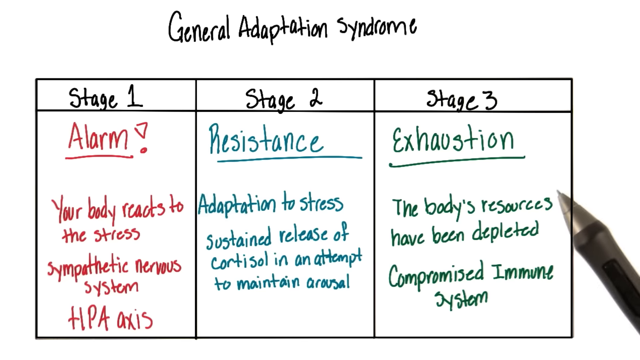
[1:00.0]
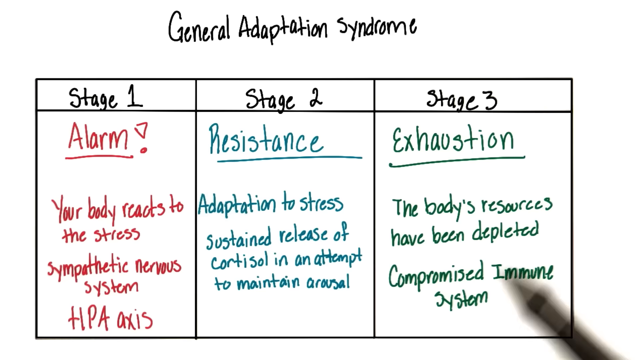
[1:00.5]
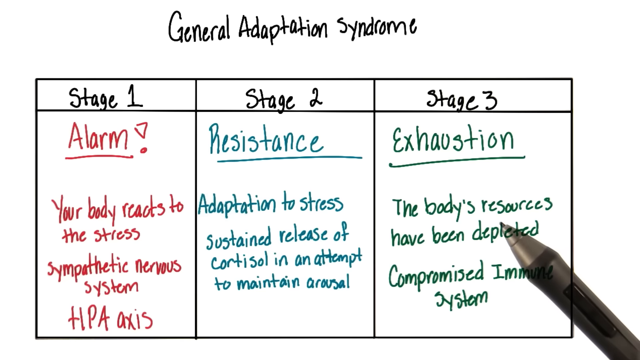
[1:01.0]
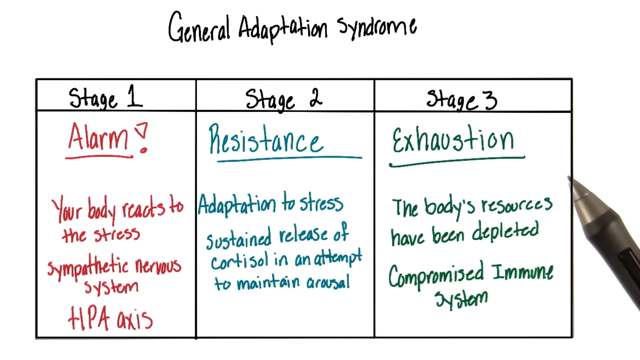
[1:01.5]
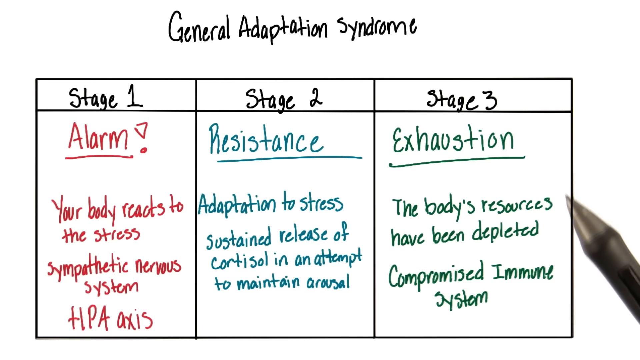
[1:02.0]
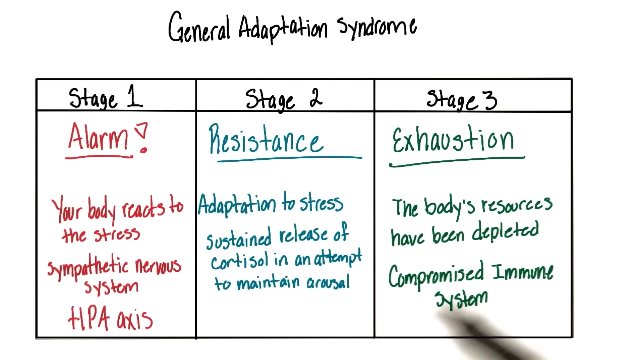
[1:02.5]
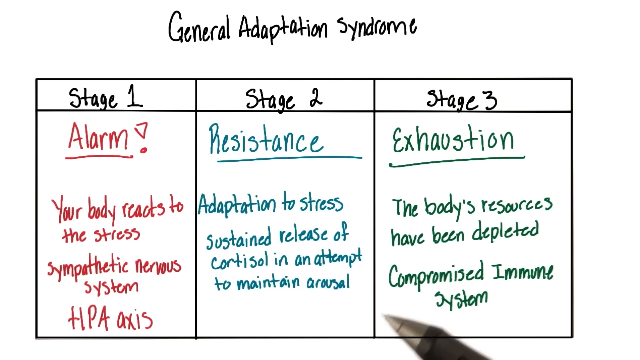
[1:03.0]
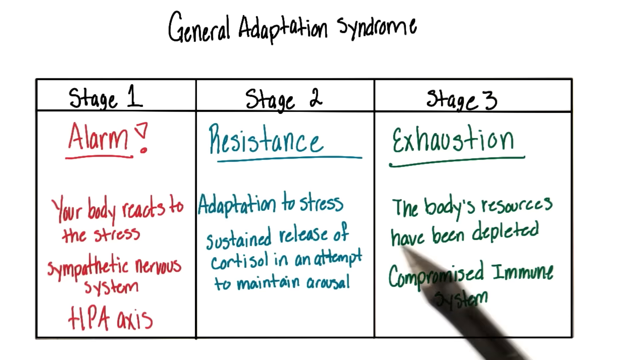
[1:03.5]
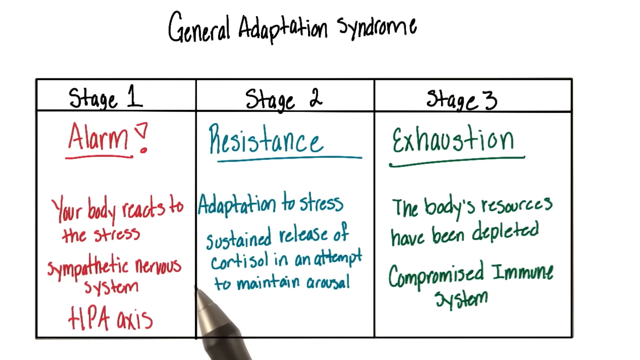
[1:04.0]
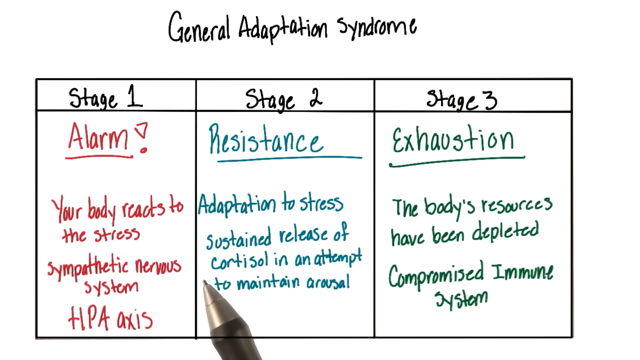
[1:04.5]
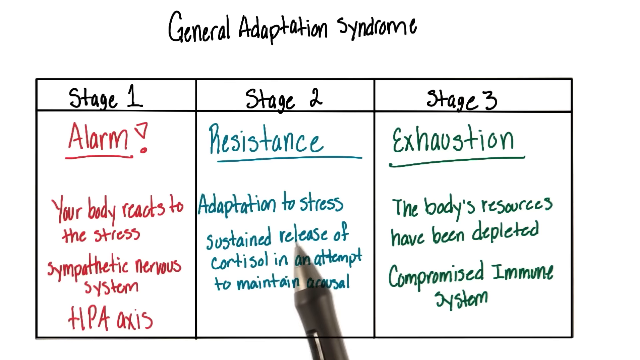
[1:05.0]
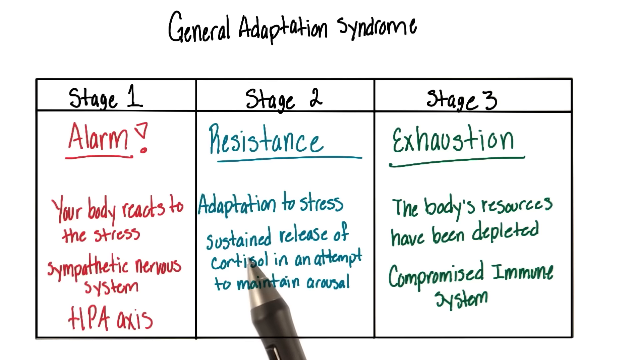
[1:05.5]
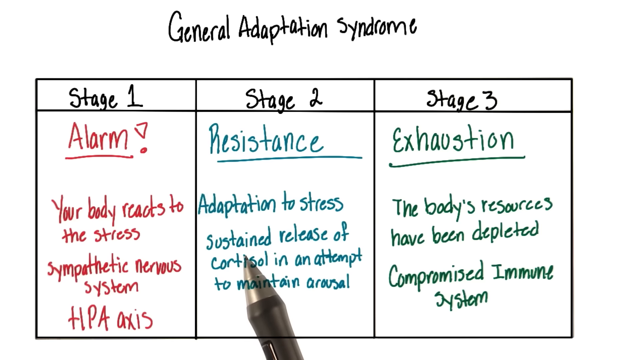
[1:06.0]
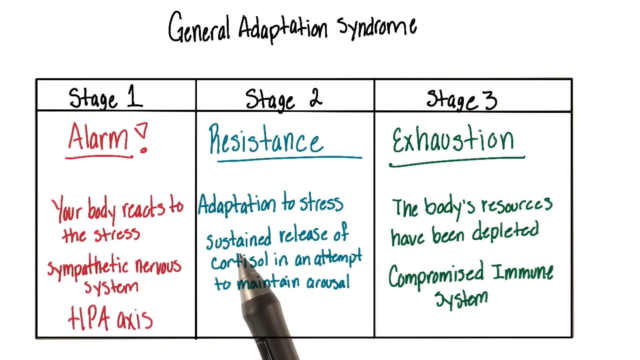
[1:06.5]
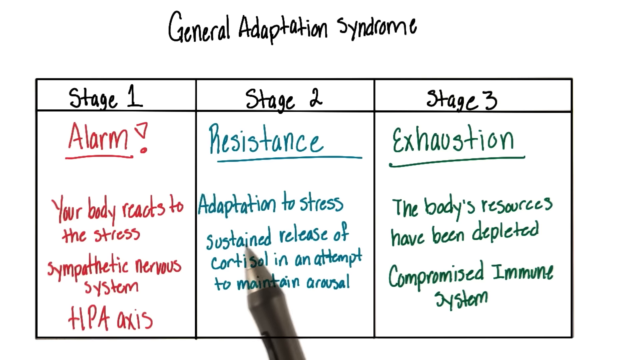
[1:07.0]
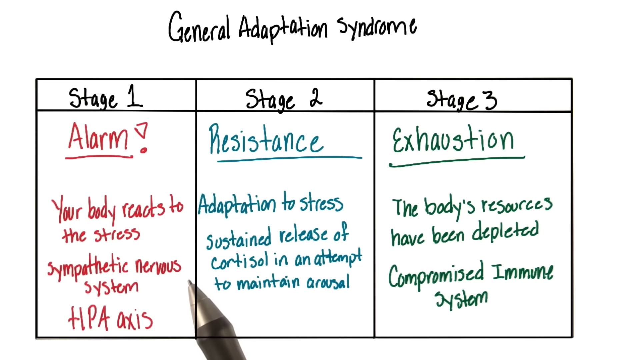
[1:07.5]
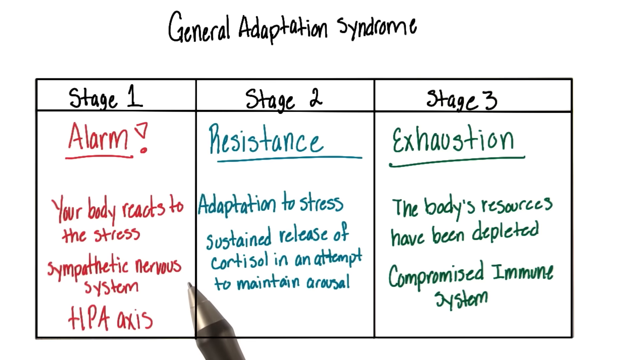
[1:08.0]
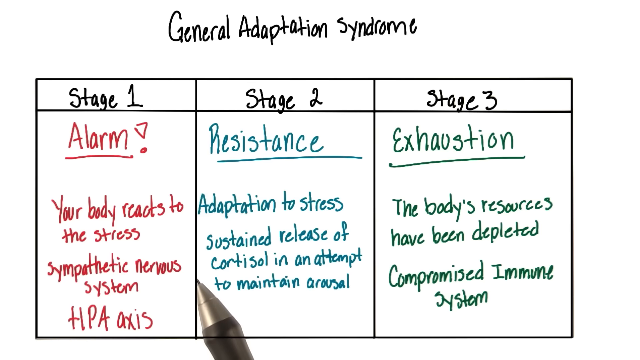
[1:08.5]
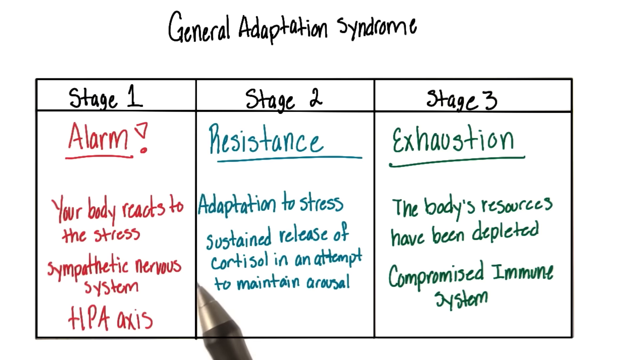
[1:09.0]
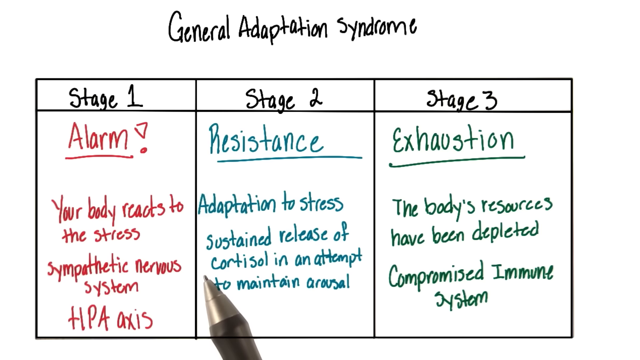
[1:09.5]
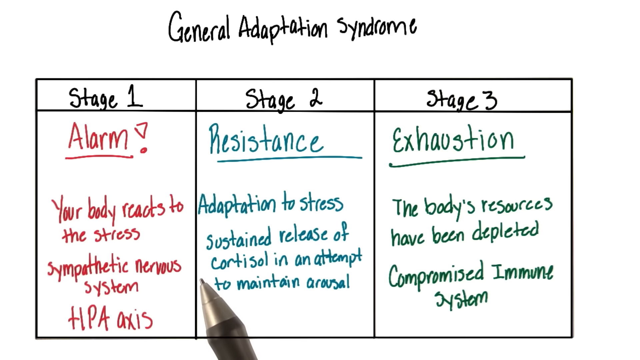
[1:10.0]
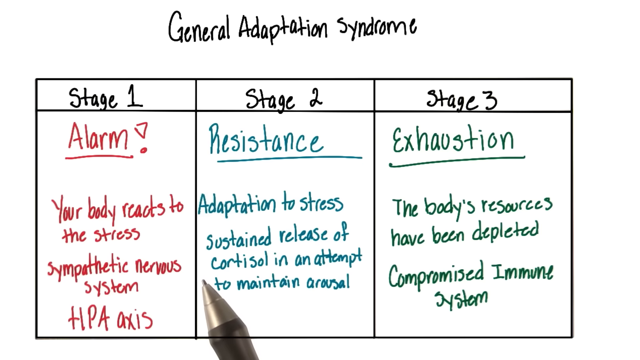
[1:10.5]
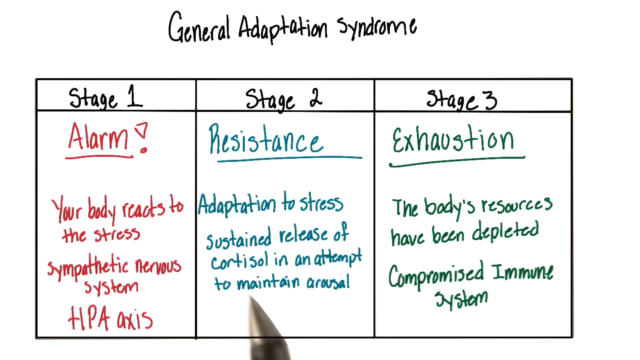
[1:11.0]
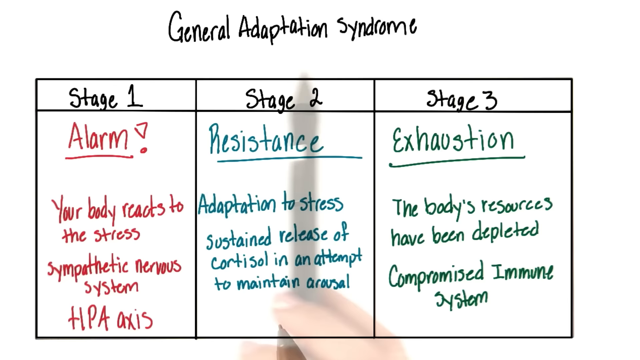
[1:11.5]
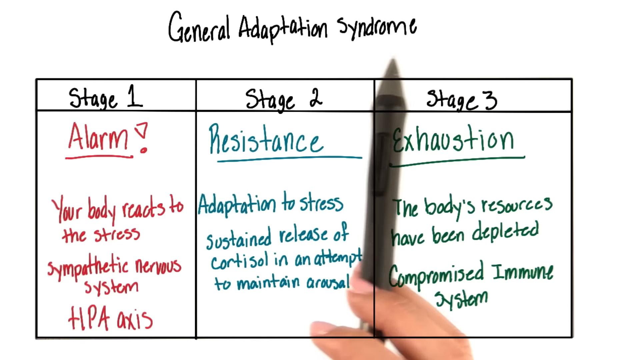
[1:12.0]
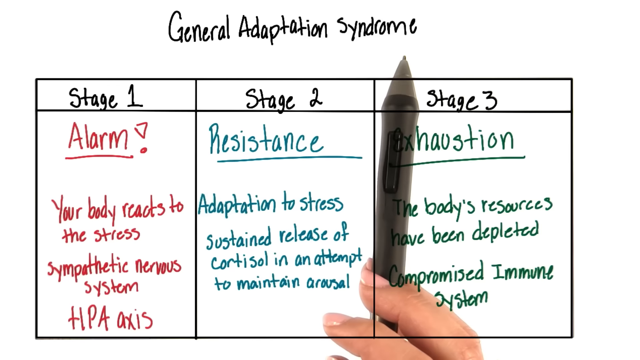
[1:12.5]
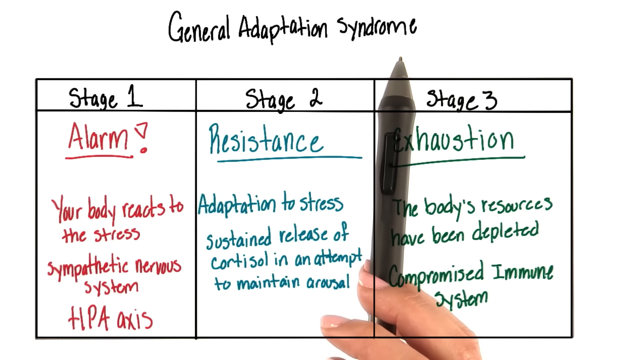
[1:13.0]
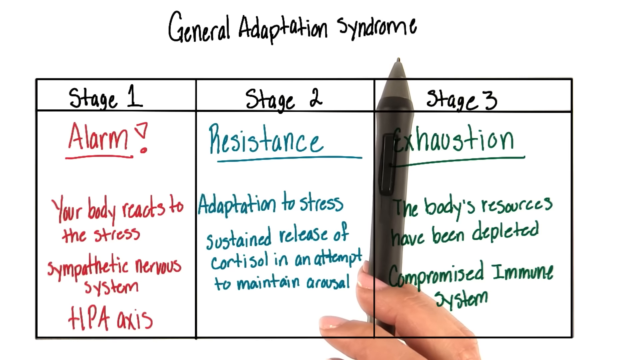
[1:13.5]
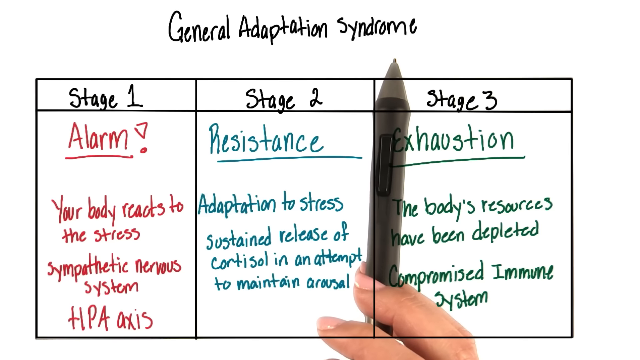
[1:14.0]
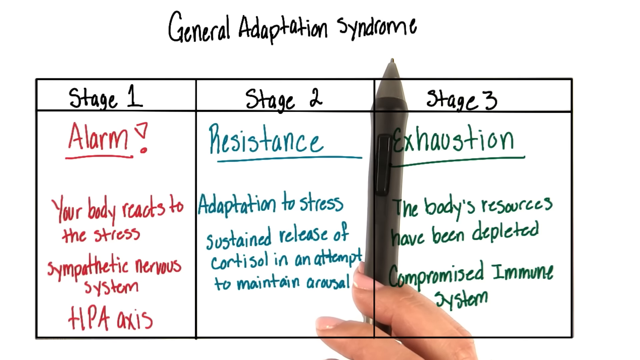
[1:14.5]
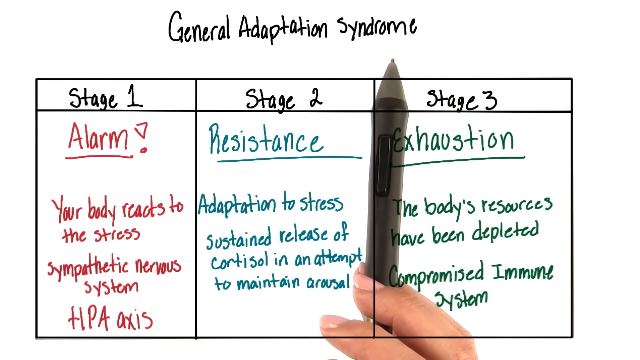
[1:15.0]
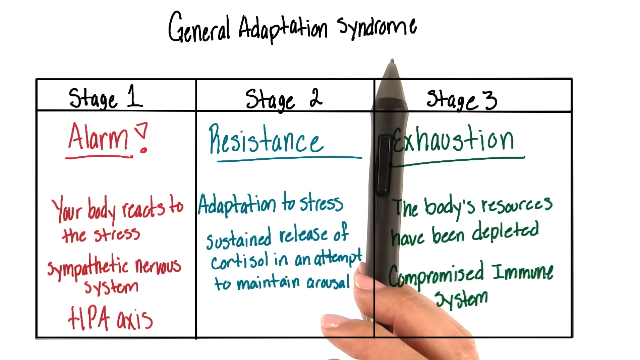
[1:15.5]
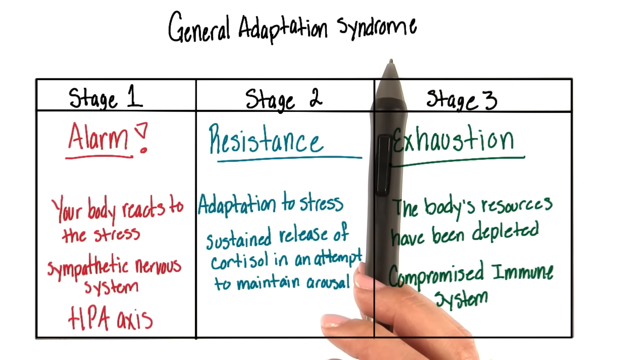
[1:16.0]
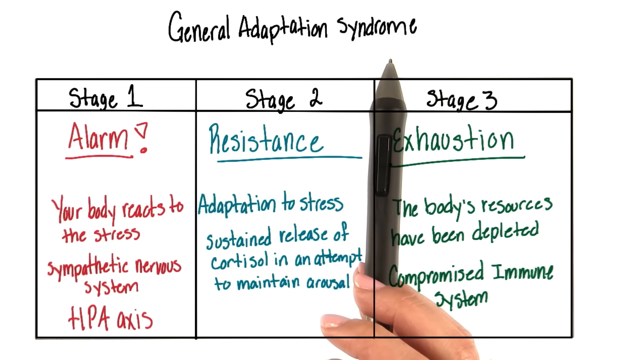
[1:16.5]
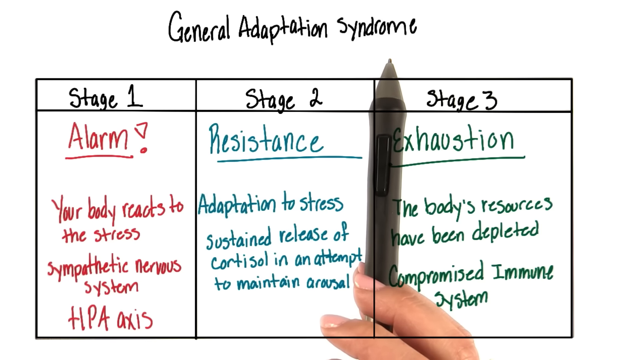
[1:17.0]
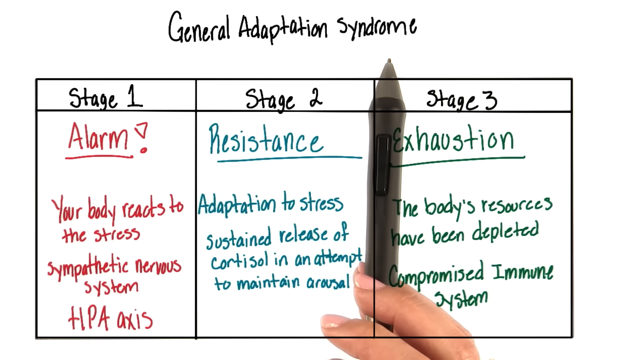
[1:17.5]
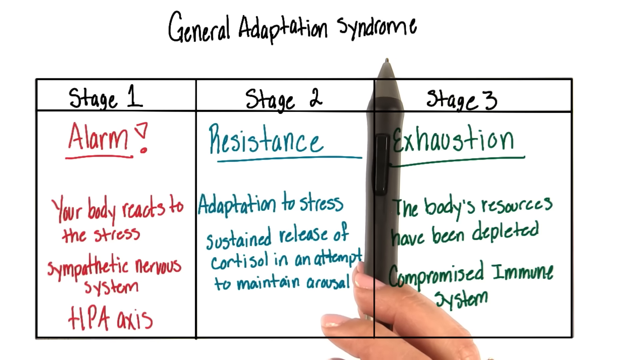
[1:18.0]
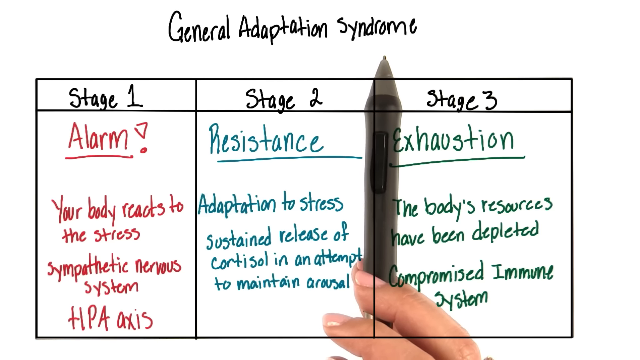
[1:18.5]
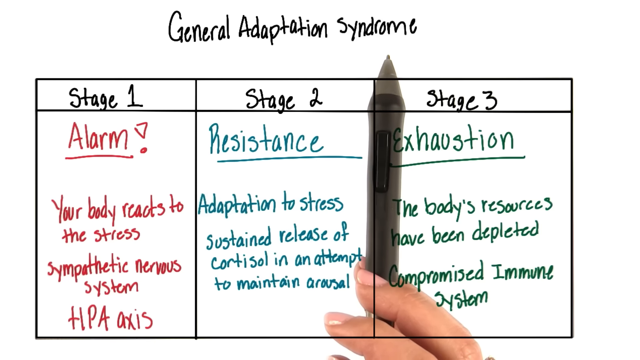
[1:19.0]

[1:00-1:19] The whiteboard shows "general adaptation syndrome" written in black at the top, with three columns whose headers are in cells: stage 1 on the left, stage 2 in the center and stage 3 on the right. In red ink, stage 1 reads "alarm!" underlined, "your body reacts to stress", "sympathetic nervous system" and "HPA axis". Stage 2 is written in an odd shade of blue: "resistance" underlined, "adaptation to stress", "sustained release of cortisol" and "attempt to maintain arousal". Stage 3 is written in green: "exhaustion", "the body's resources have been depleted" and "compromised immune system". The woman moves the pen around, pointing to areas in stage 3, stage 2 and stage 1, then points to "general adaptation syndrome" with the pen facing straight up, and the video ends.